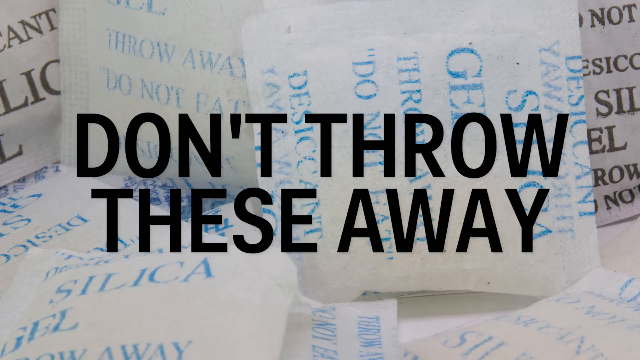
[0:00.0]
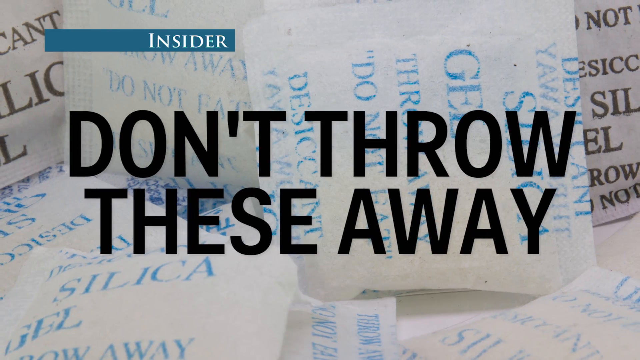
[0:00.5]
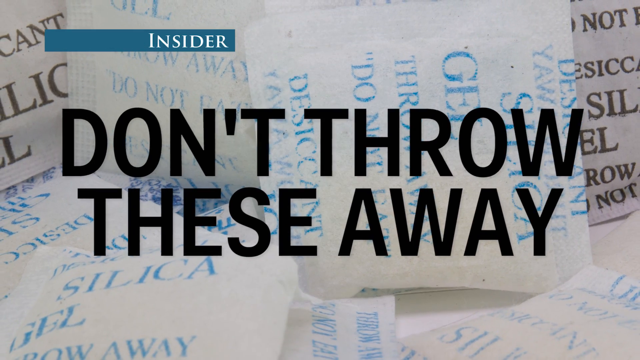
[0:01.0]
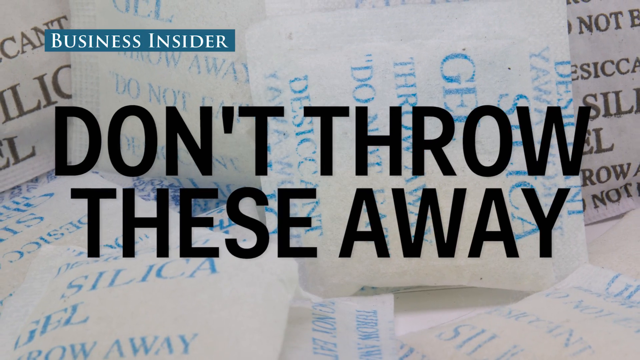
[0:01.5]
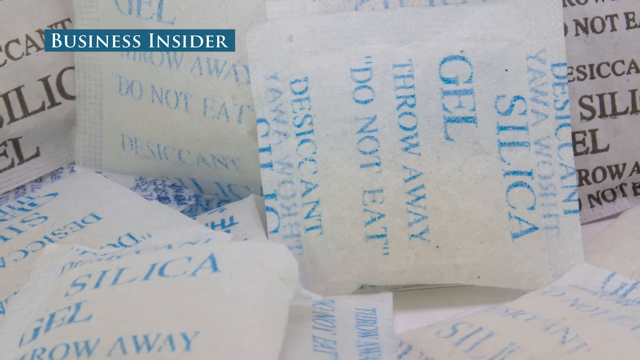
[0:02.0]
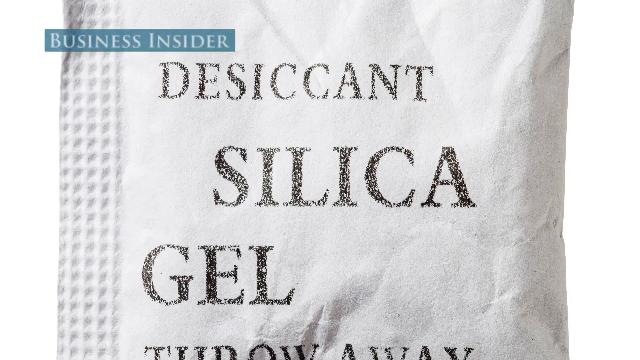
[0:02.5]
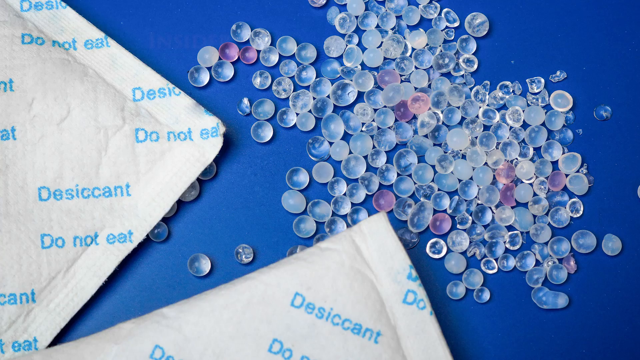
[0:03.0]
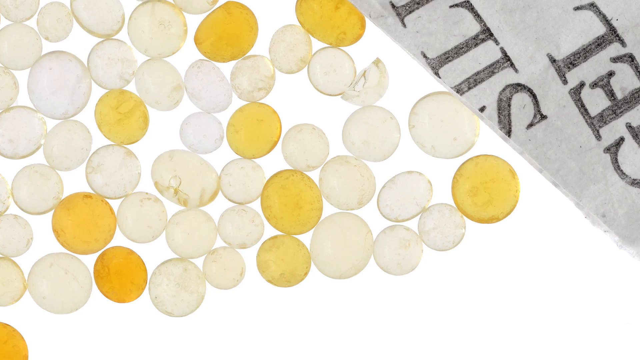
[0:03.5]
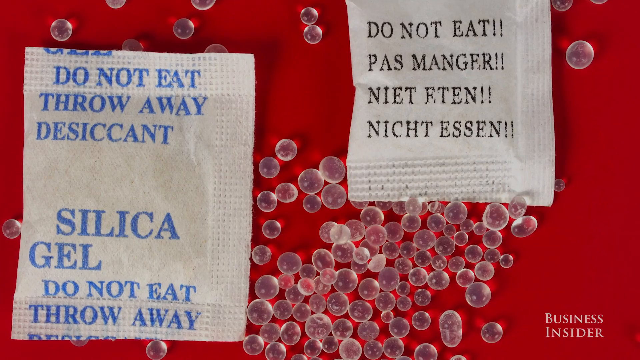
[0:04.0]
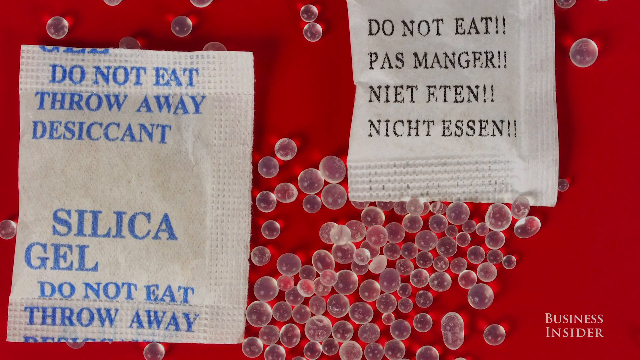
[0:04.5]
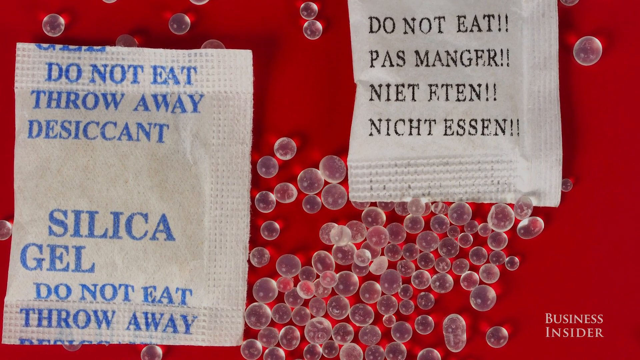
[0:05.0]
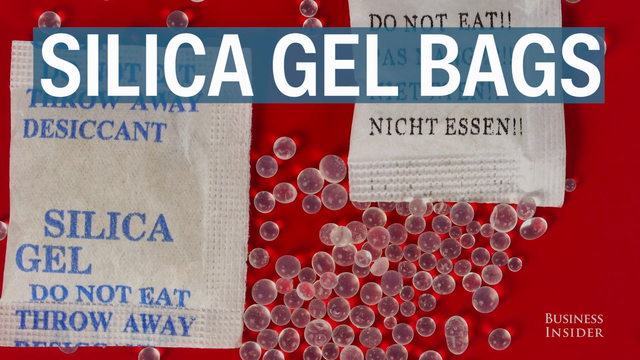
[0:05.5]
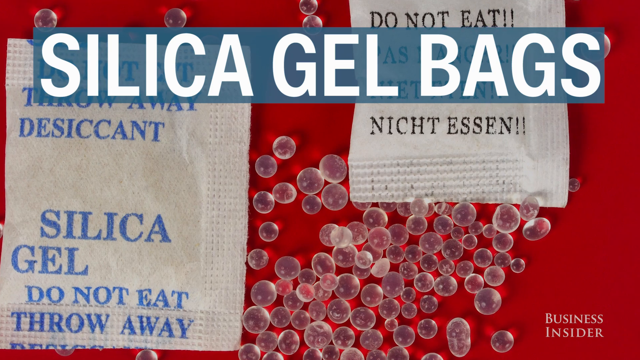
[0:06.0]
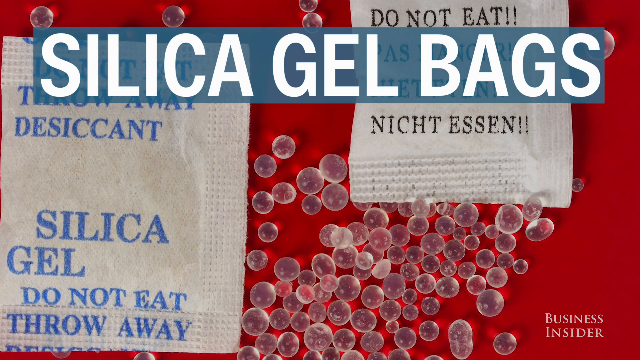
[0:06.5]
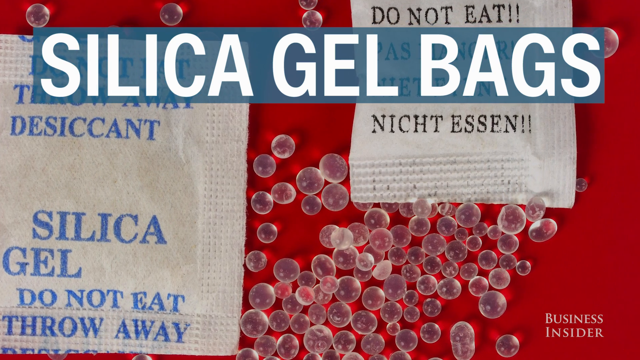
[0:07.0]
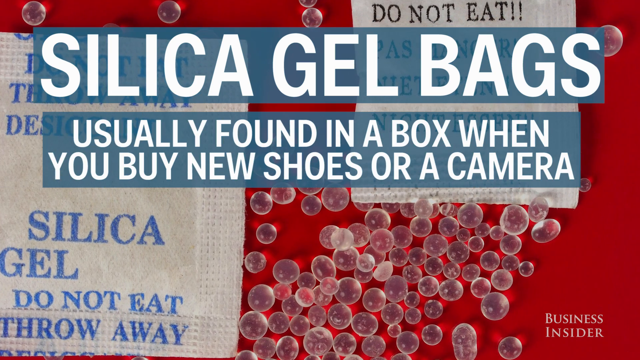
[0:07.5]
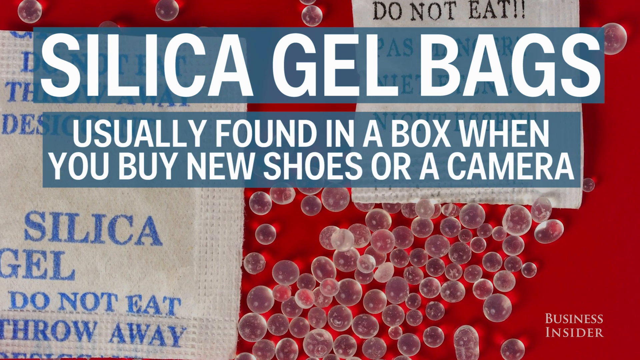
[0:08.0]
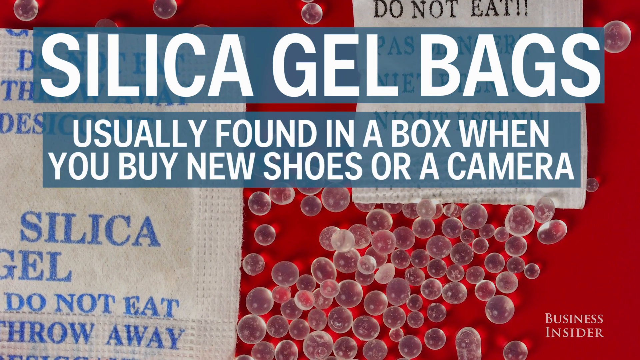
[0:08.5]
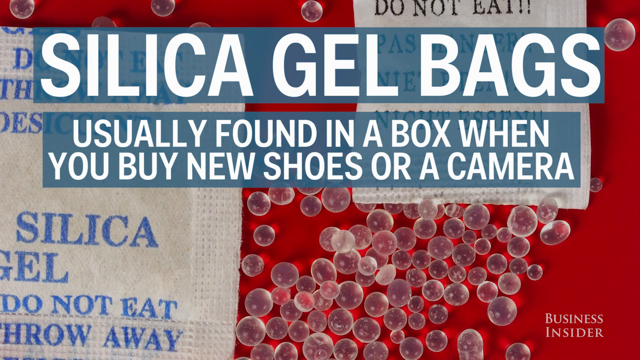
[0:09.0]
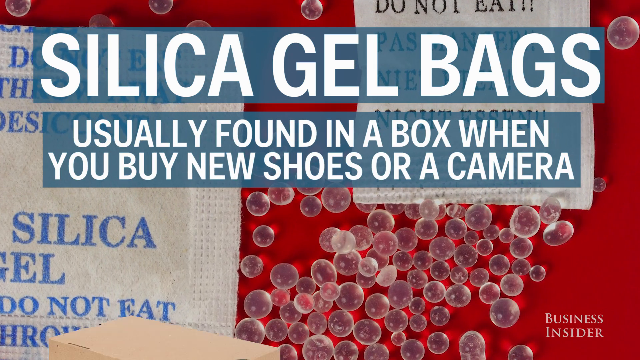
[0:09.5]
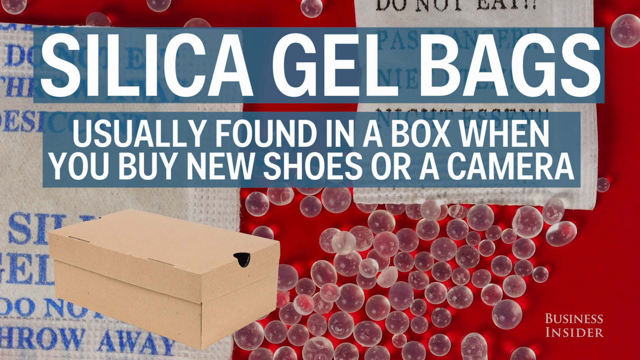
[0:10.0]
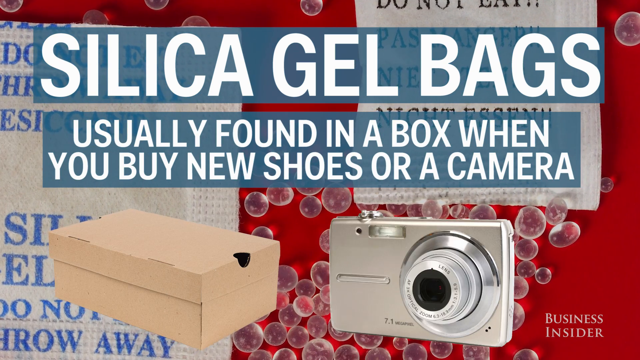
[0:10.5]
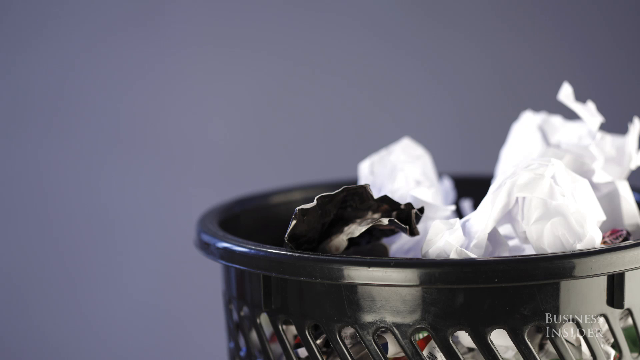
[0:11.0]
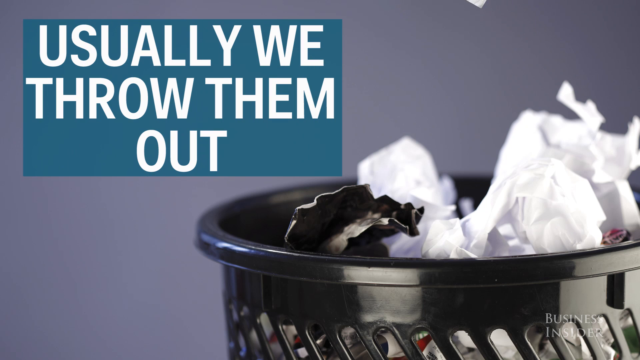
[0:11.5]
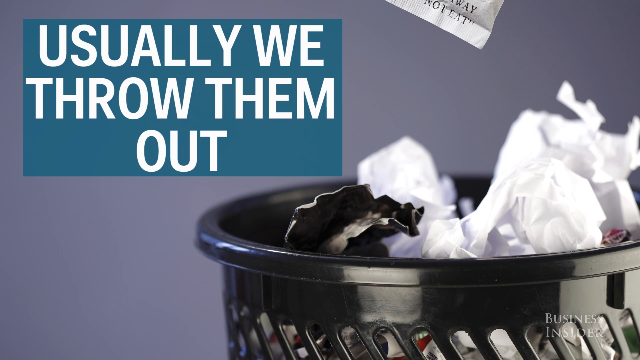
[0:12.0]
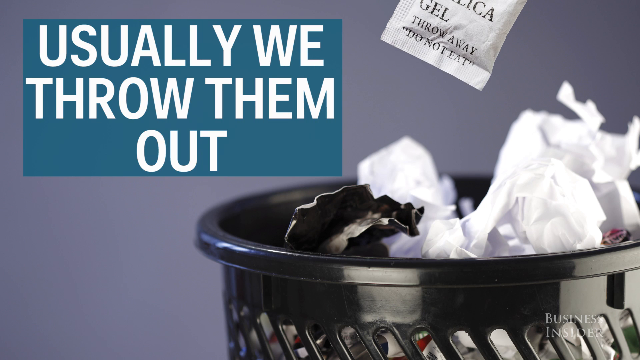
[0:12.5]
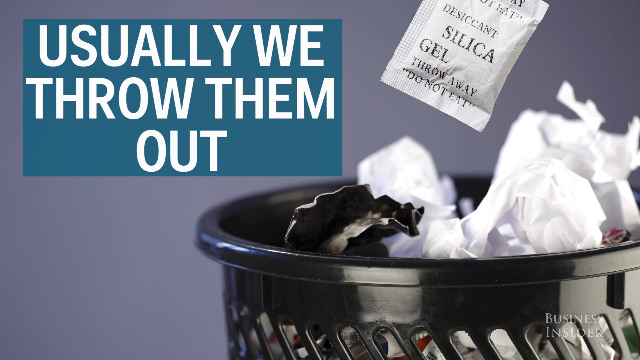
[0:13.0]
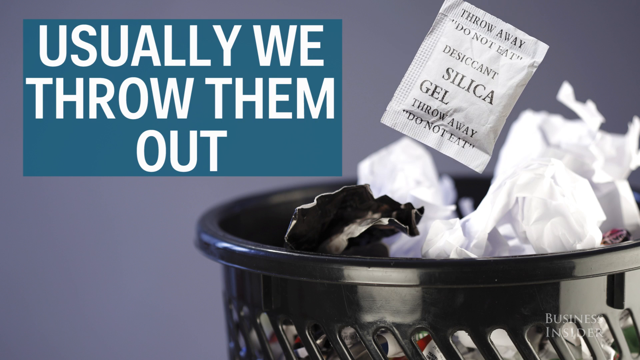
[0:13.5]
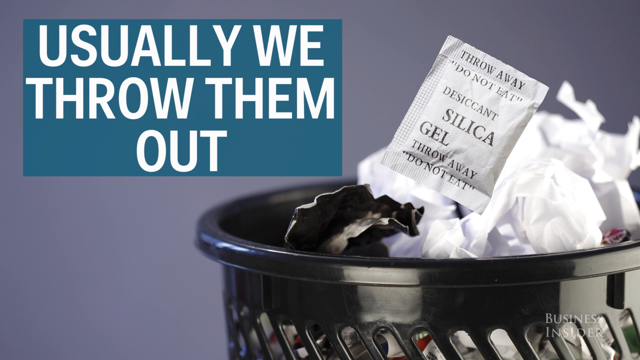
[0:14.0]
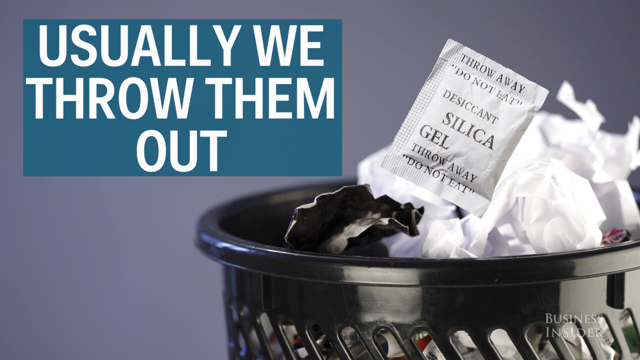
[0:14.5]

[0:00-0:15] The video is titled Why You Should Never Throw Away Silica Bags. It opens with on-screen text saying "don't throw away silica gel bags" and shows the gel bags along with their contents, the little gel balls, placed outside the bags. White all-caps text reads "silica gel bags, usually found in a box when you buy new shoes or a camera." The text then says "usually we throw them out," and a visual shows a silica gel bag going into the trash. The video looks like it was created by Business Insider as an informational video on why not to throw away silica gel bags.